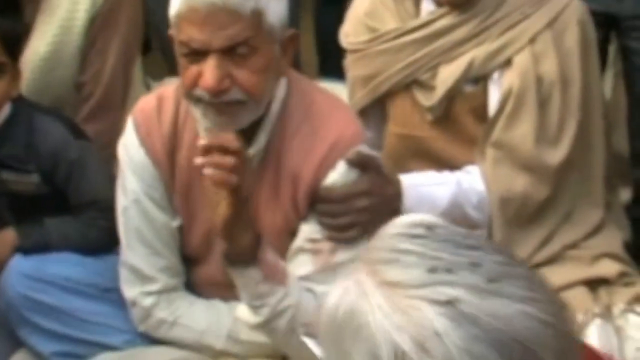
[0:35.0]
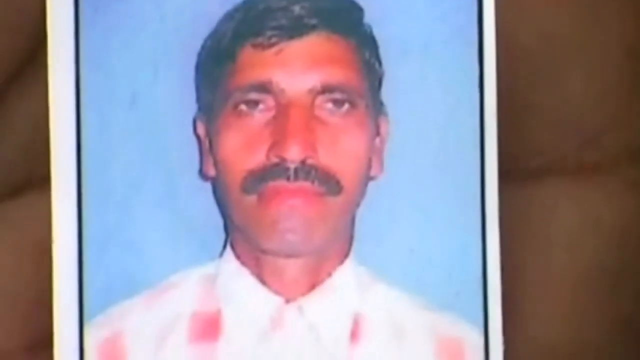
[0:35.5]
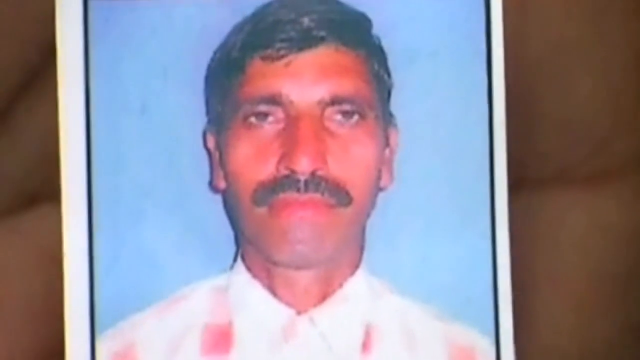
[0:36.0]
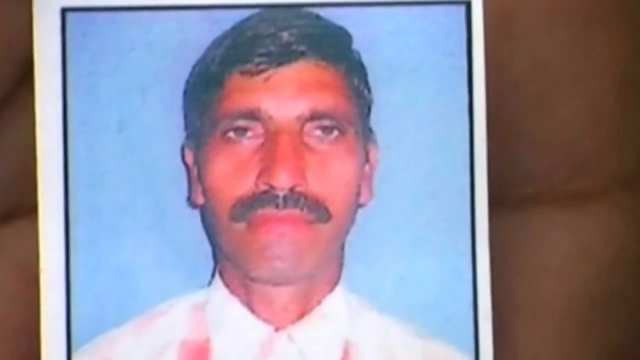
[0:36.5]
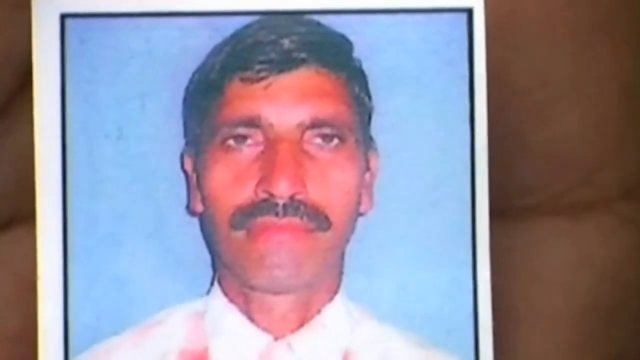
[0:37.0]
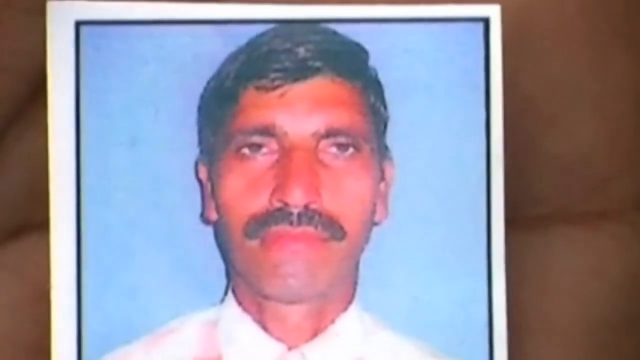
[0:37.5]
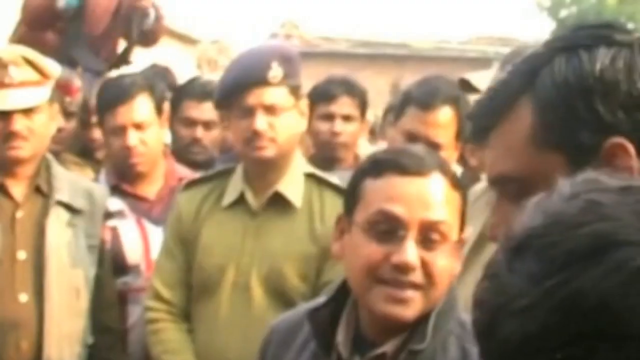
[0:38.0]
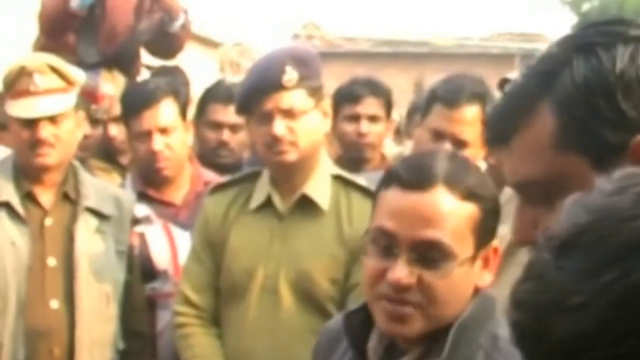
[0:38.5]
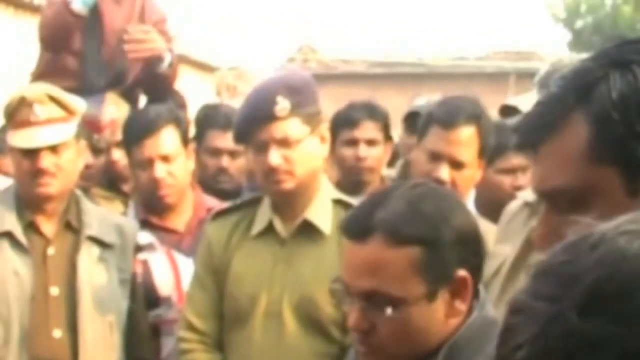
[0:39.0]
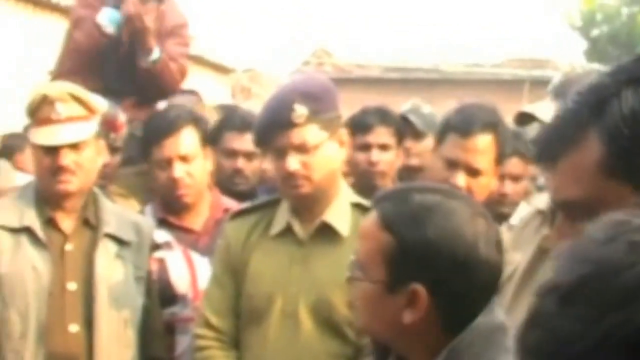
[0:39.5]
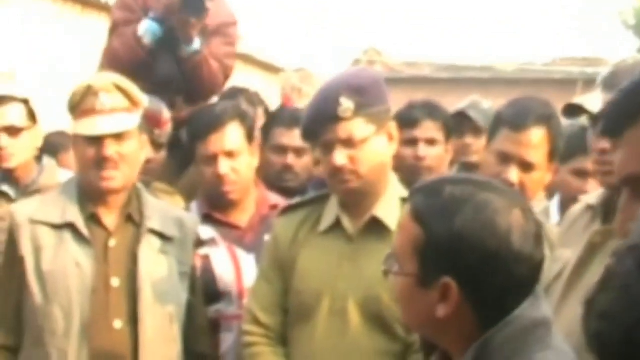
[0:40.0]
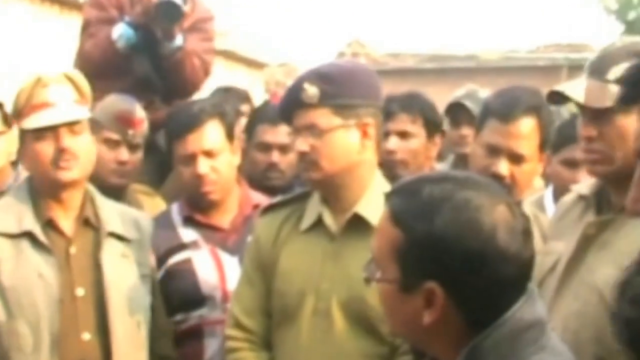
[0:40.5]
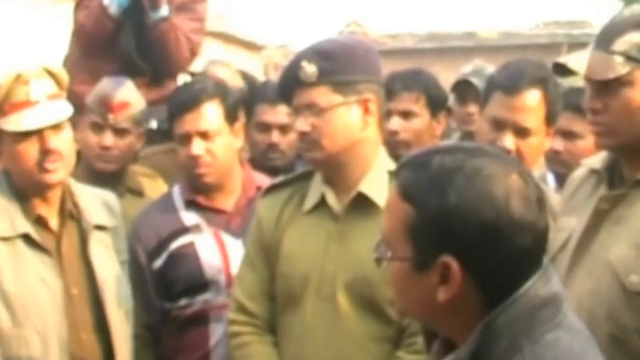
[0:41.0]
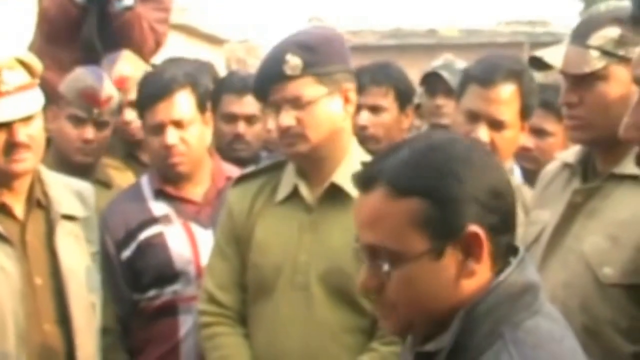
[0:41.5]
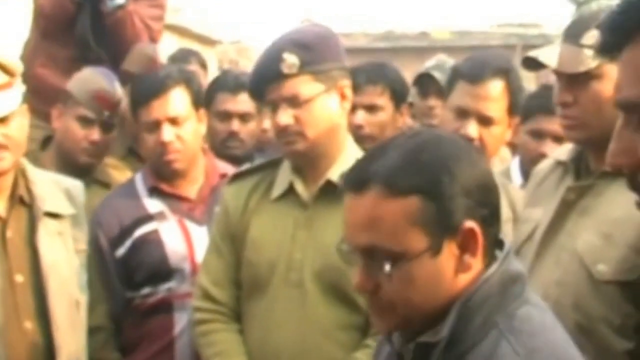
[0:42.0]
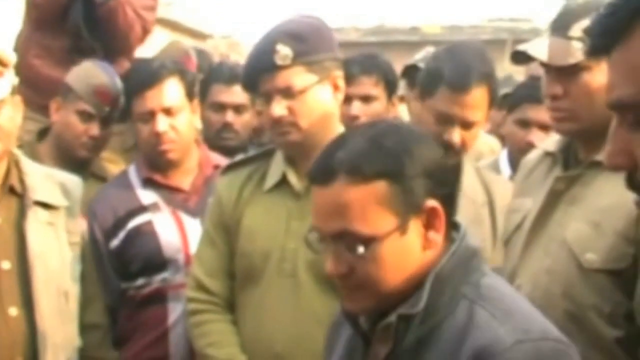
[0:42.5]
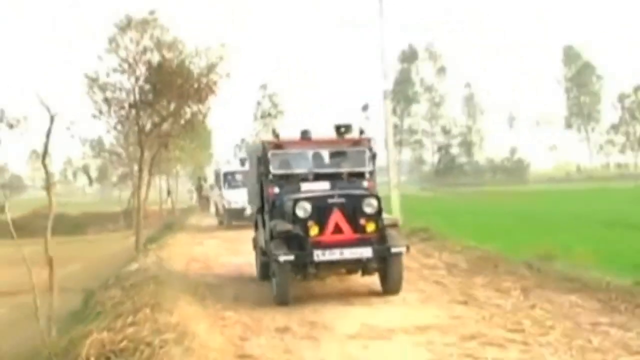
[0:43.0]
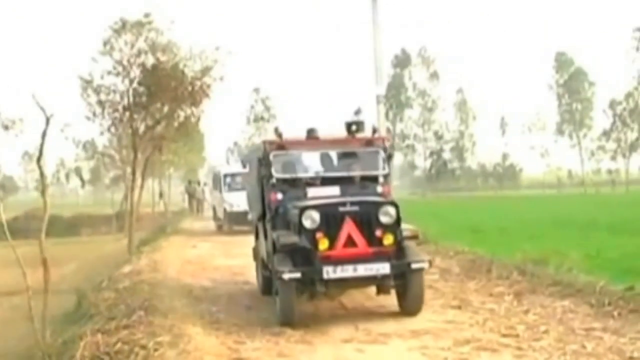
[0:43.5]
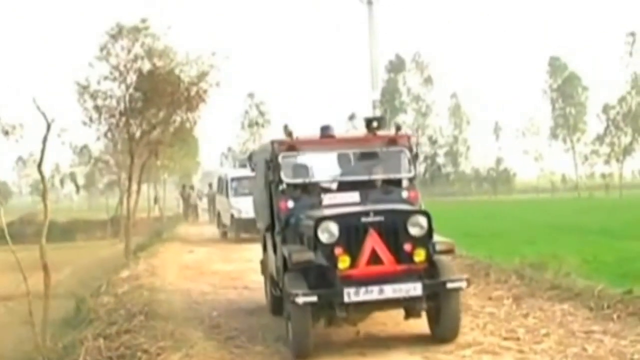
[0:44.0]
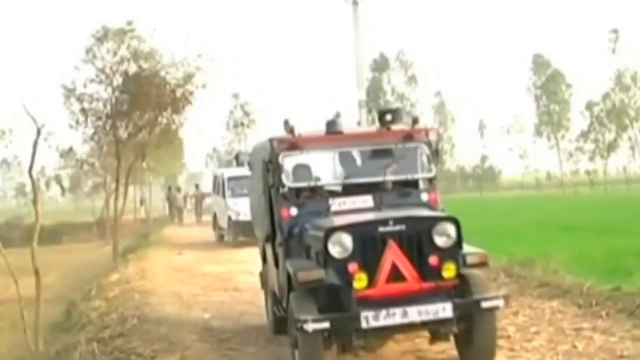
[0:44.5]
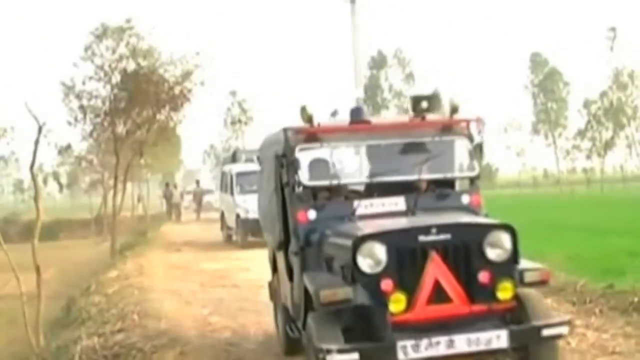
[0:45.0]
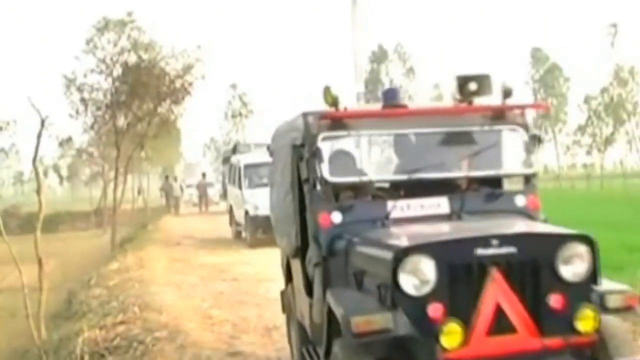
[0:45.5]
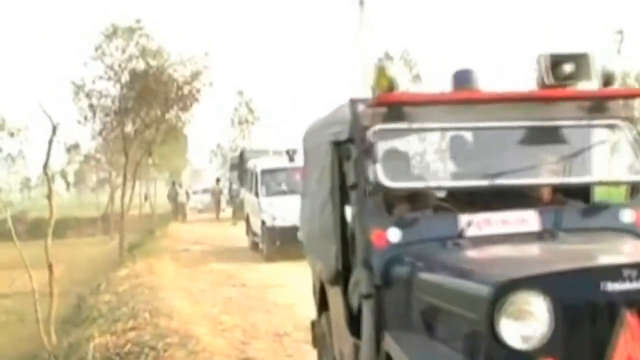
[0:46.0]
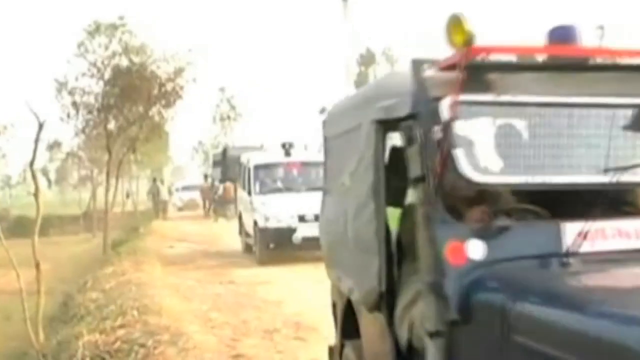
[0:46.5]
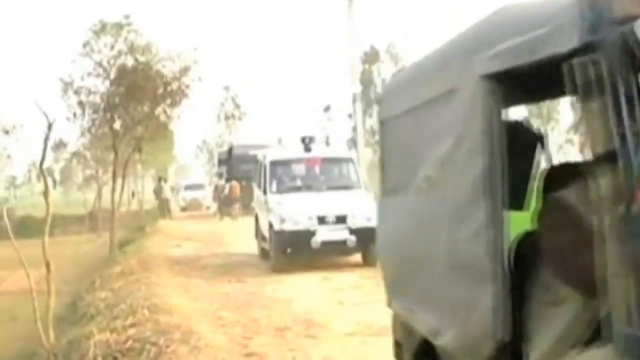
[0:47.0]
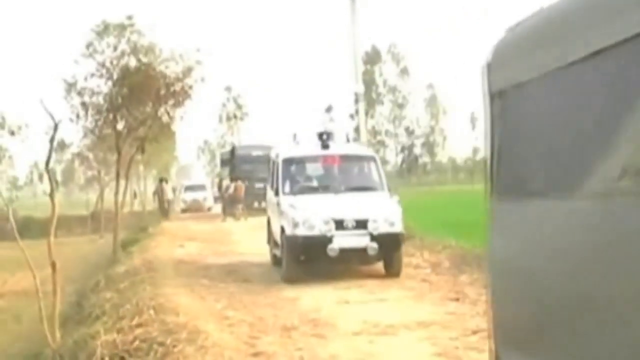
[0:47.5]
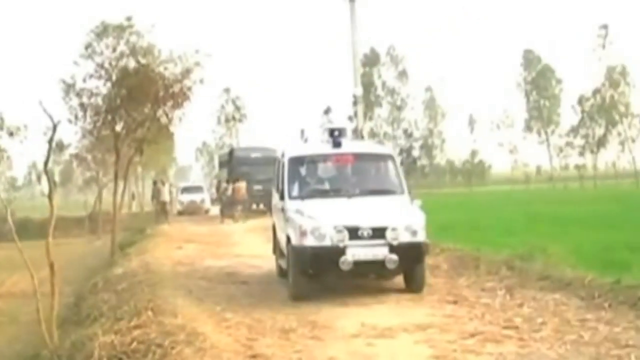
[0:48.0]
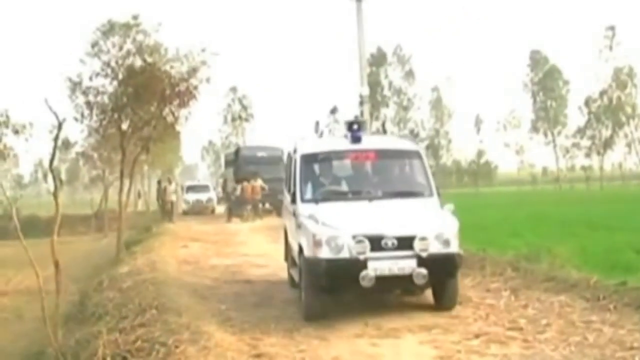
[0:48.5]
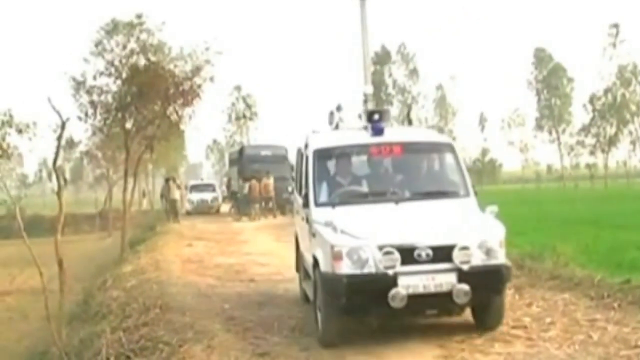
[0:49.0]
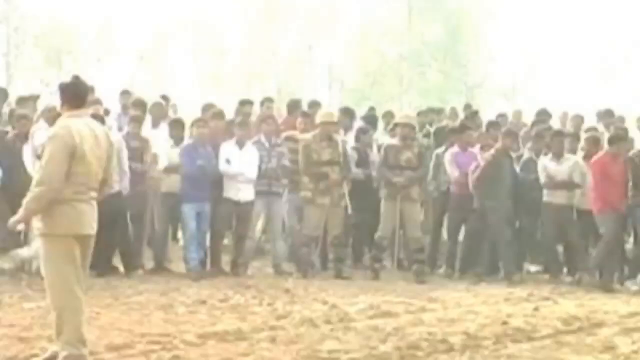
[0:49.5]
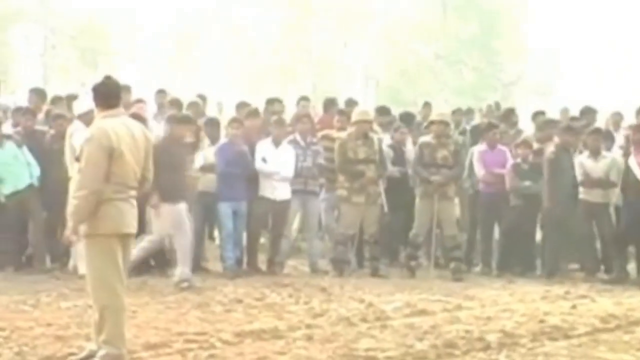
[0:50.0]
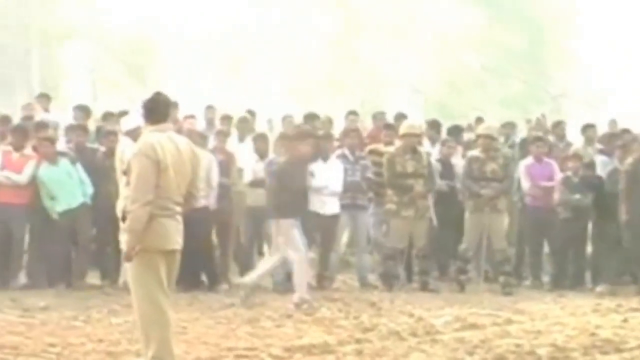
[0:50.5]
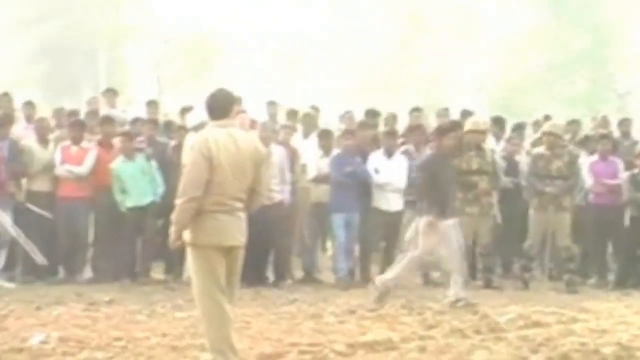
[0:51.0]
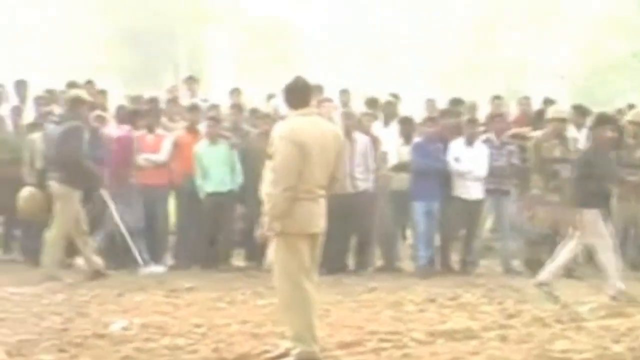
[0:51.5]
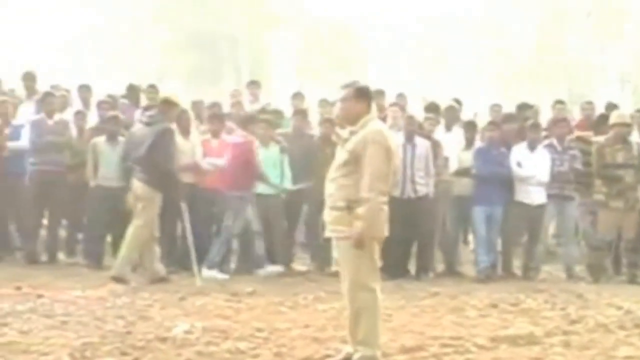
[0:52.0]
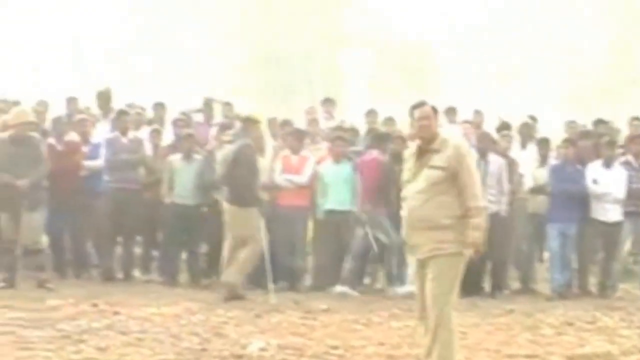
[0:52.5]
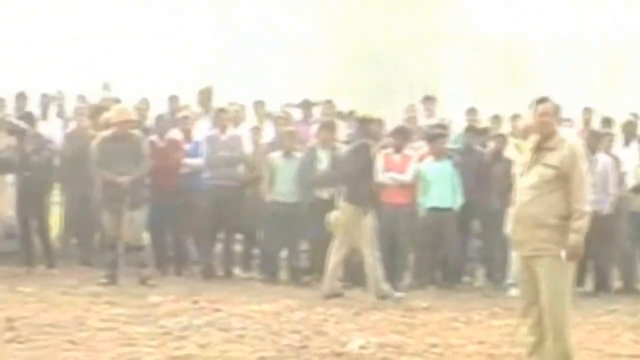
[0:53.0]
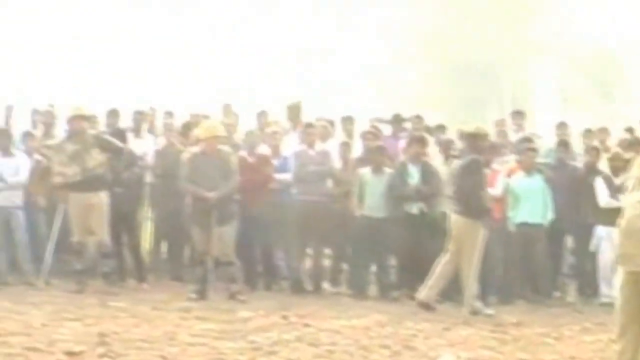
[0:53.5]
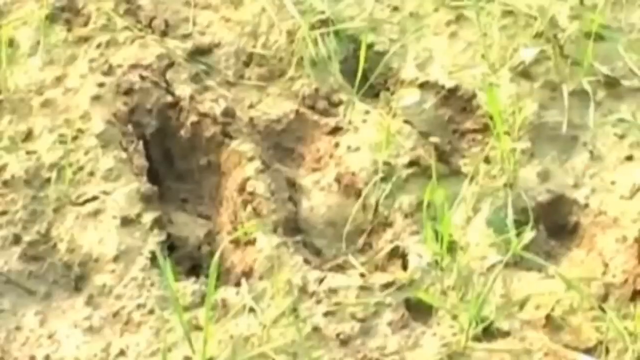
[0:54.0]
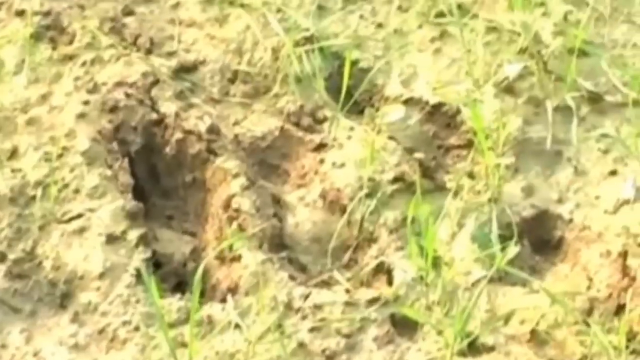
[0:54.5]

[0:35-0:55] The segment begins with a photo of what is apparently the man who died, possibly a farmer killed by the tiger. Tiger footprints are in the mud, and military personnel and lay people are standing around, probably discussing solutions. Military vehicles and what looks like an ambulance drive through the mud. People look very confused and alarmed in a chaotic scene, and it seems no one knows how to capture the tiger. The location might be India.